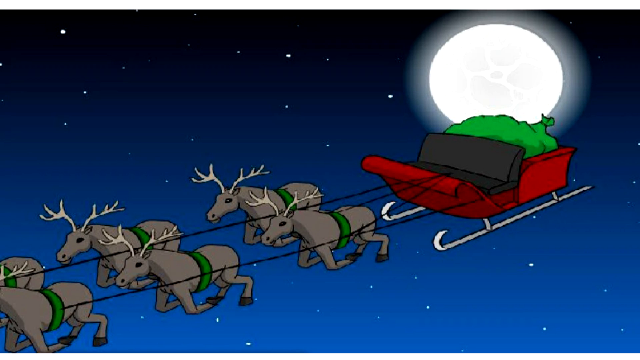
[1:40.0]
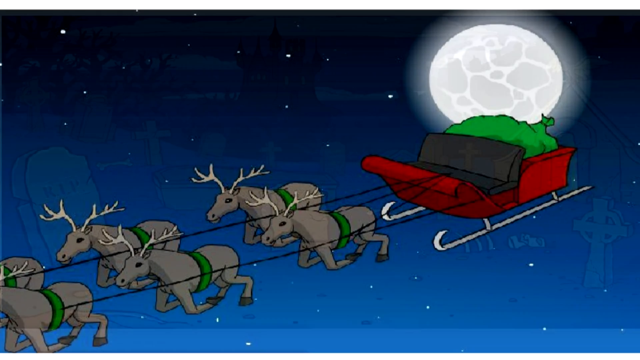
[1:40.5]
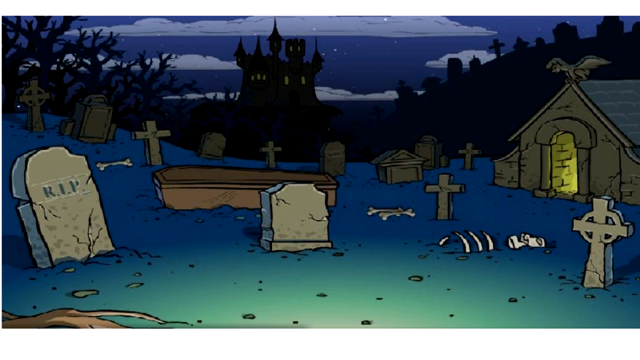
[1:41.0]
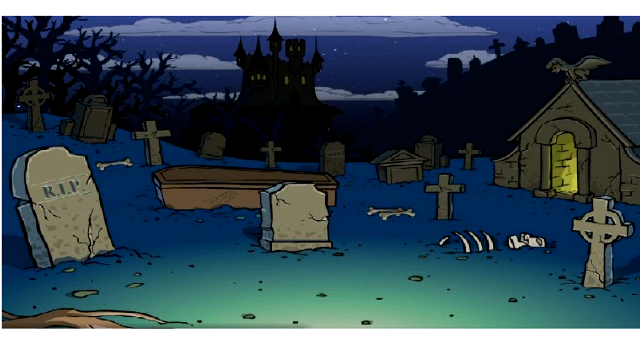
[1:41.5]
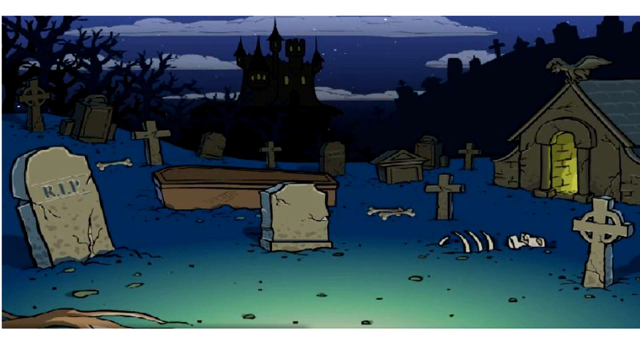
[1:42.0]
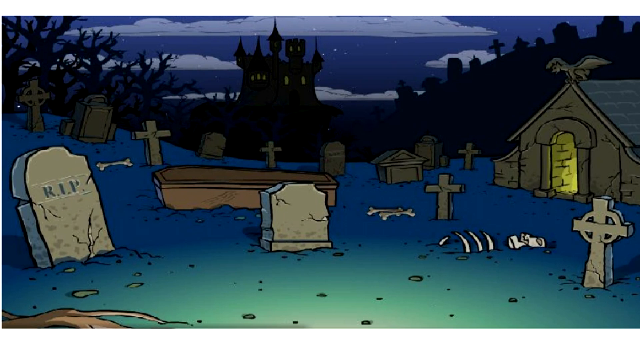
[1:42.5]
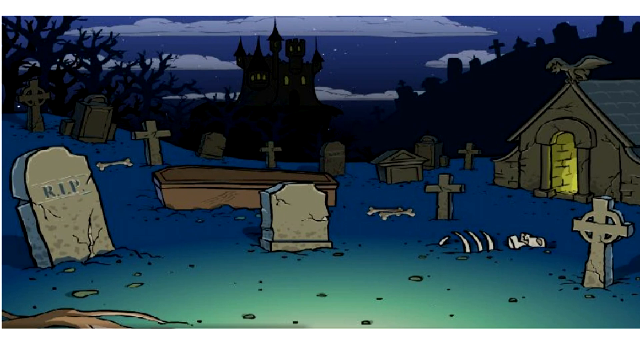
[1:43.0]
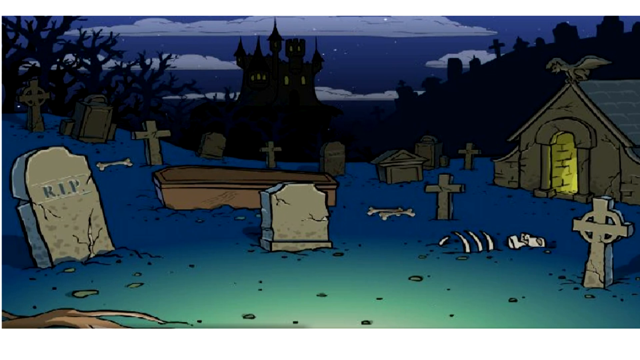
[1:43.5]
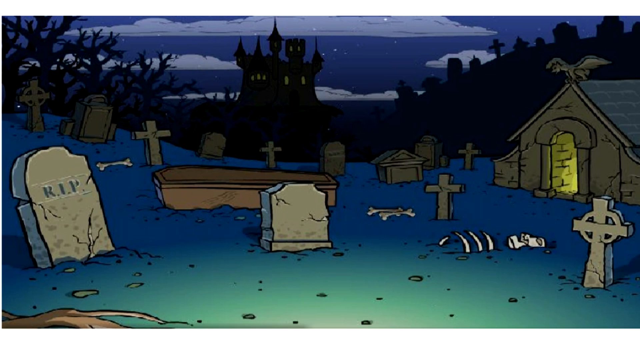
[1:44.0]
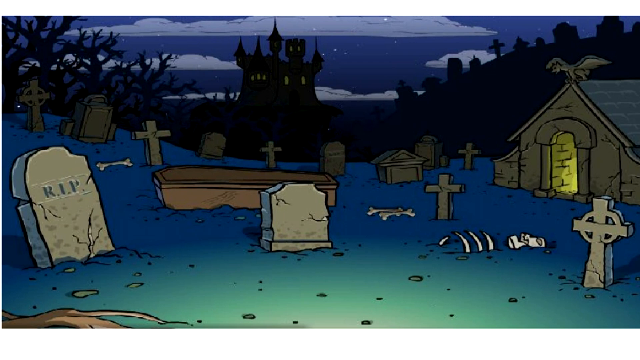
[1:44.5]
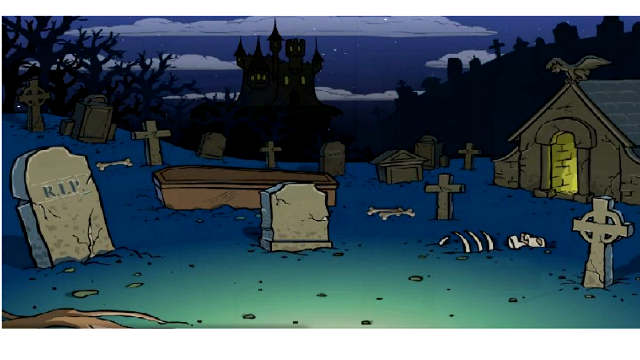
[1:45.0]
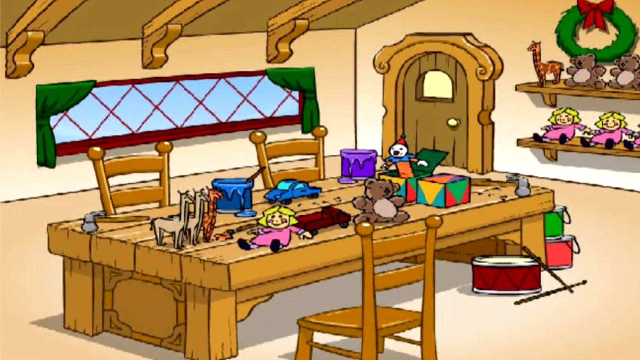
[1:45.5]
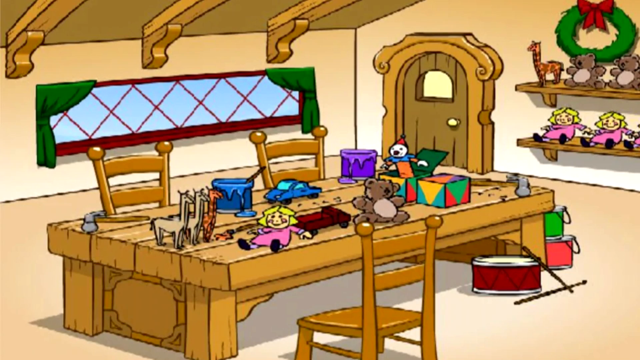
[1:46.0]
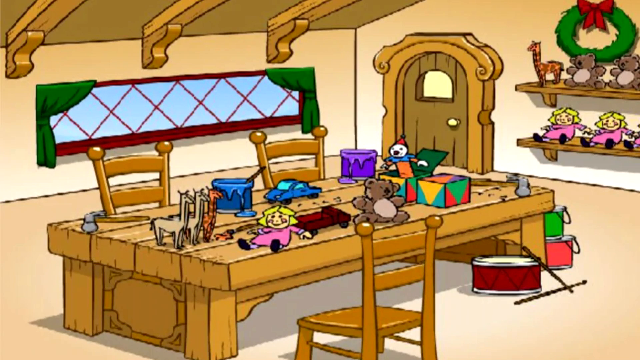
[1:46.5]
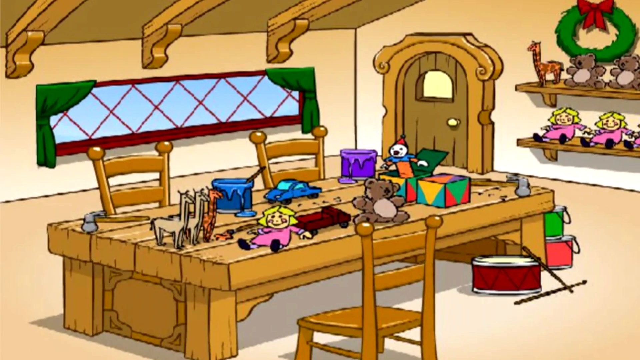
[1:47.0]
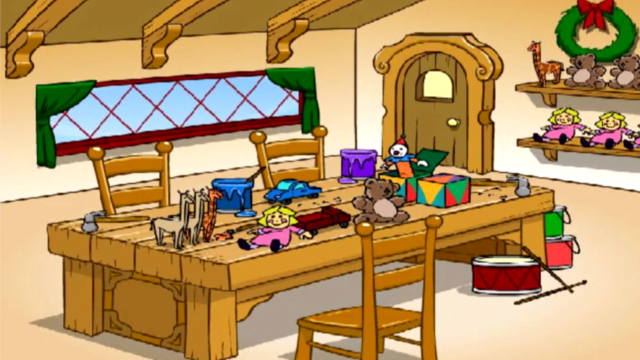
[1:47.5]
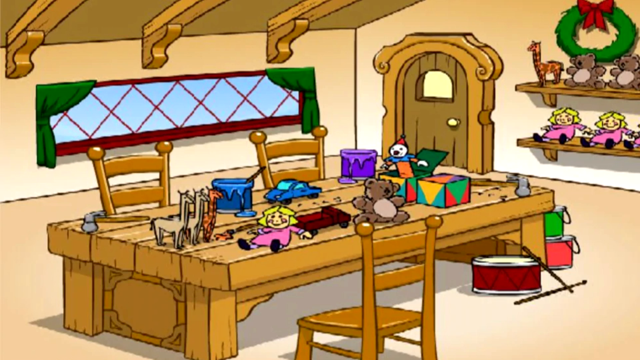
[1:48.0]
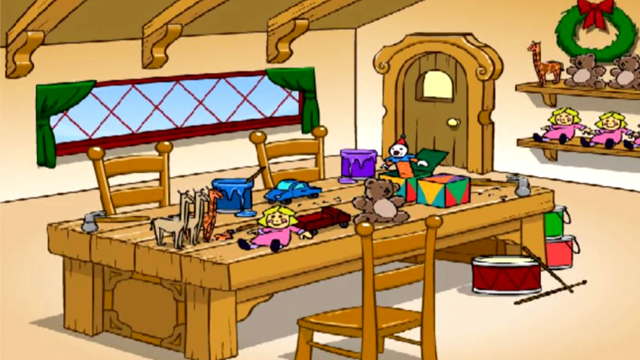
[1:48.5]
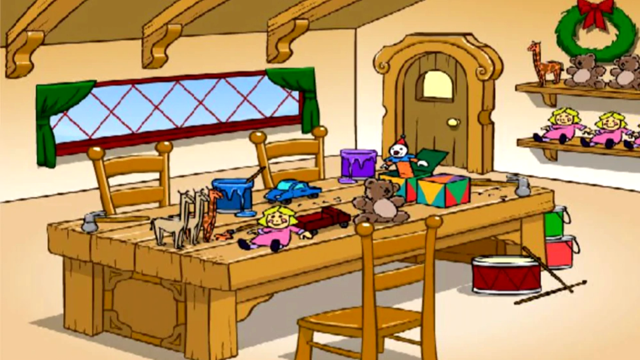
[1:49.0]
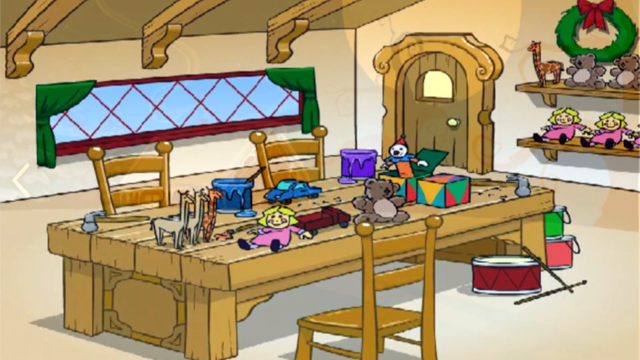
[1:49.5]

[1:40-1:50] Next is a graveyard on a dark night, with clouds in the sky. Right in front is an eerie, completely black building with yellow windows. To the right is a hill with gravestones, including a cross, and black dead trees stand in the background. In front is the graveyard itself. A building just to the right has a yellow glow through its door and a bird on top. There are maybe 10 or so gravestones dotted around, and a coffin. Two large gravestones are close to the front of the camera: the one on the left says "R.I.P." with a bone behind it, and the other is blank, with more bones next to it. A ribcage is poking out of the ground. The video cuts to a toy room, possibly a toy factory room since there are multiples of the toys. A Christmas wreath with a red bow hangs on the wall. There is a big table with three chairs where it looks like people sit to make toys, and a long window behind it with green curtains. On two shelves are some teddy bears and a giraffe on the top shelf and three dolls in pink dresses on the bottom one. A drum with a couple of drumsticks is on the floor. There appear to be cans of paint around, a blue and a purple on the table and possibly a green and a red on the floor by the table leg. On the table are a jack-in-the-box, a blue car, and three giraffes, one painted and the other two looking blank. There is also some kind of tool, possibly a hammer, one of the dolls in a pink dress, another teddy bear, and another tool at the other end, giving a workshop feel.